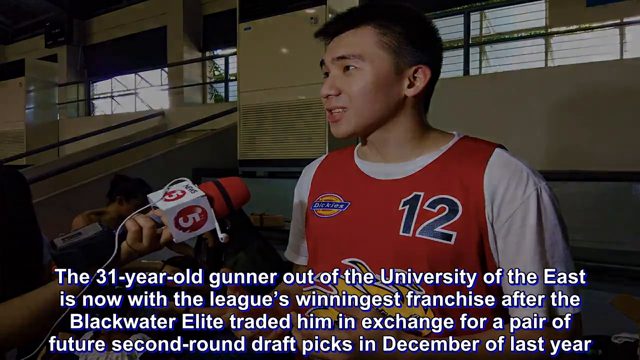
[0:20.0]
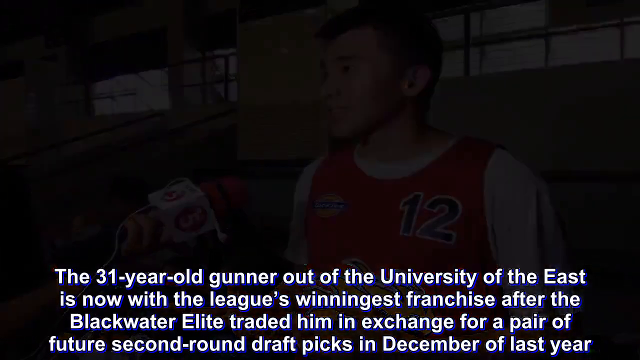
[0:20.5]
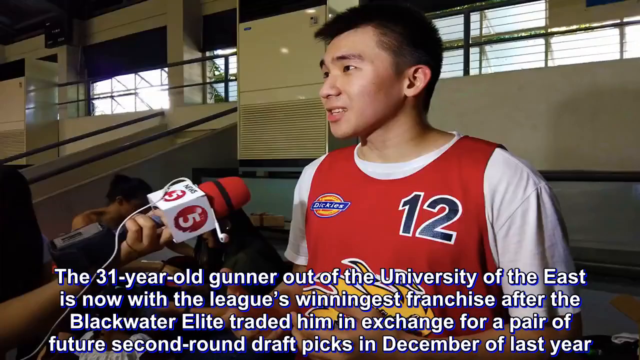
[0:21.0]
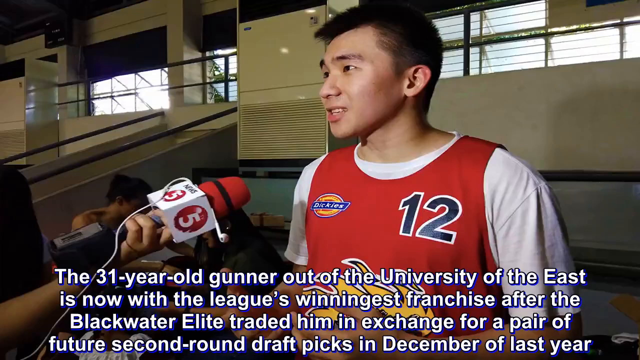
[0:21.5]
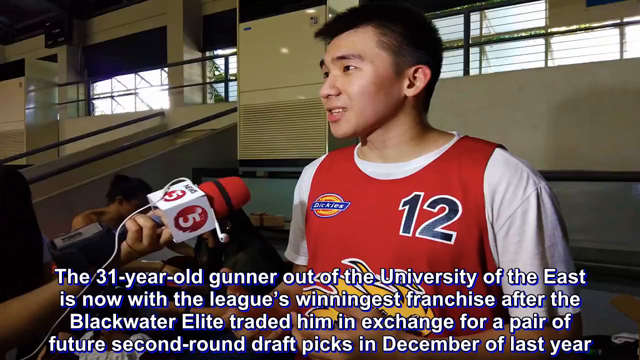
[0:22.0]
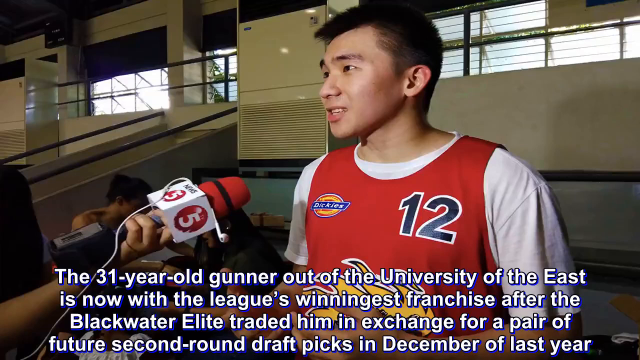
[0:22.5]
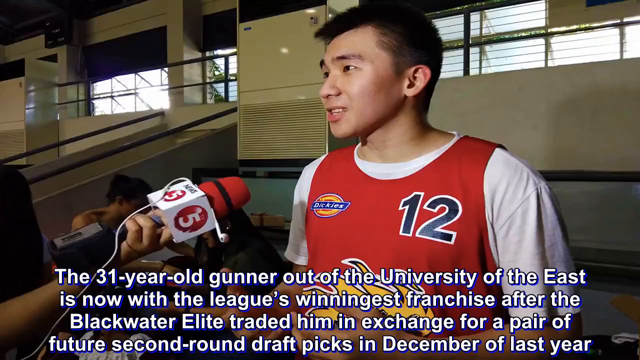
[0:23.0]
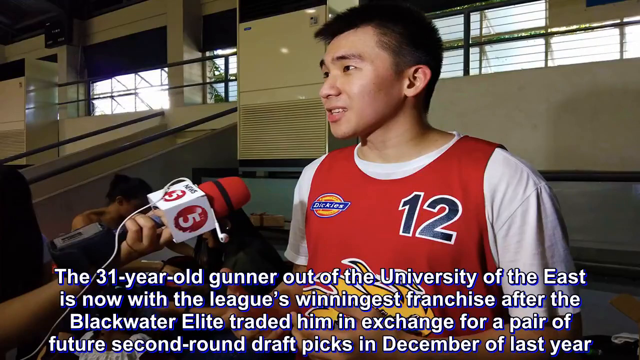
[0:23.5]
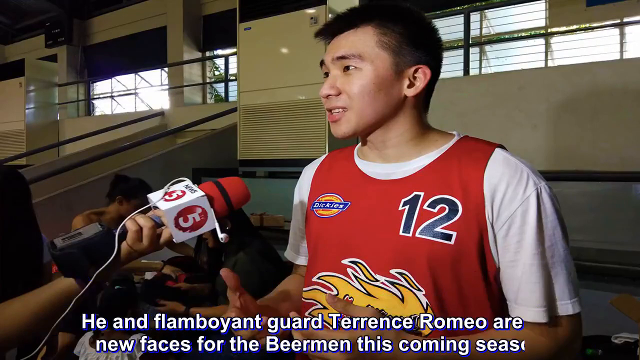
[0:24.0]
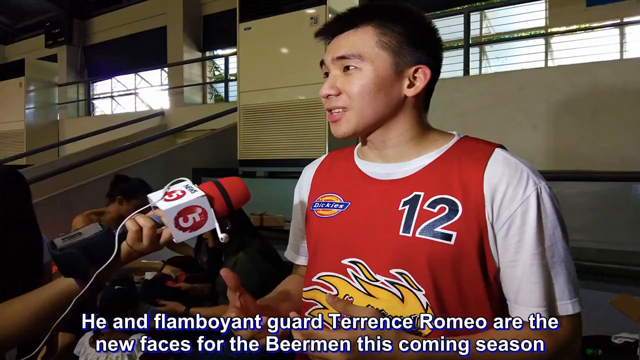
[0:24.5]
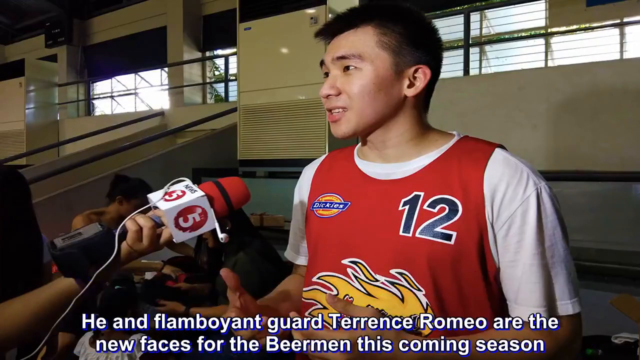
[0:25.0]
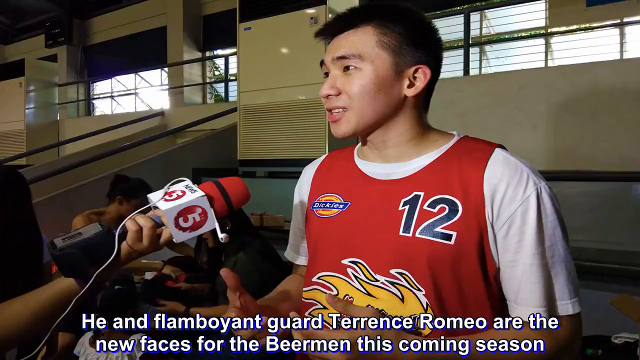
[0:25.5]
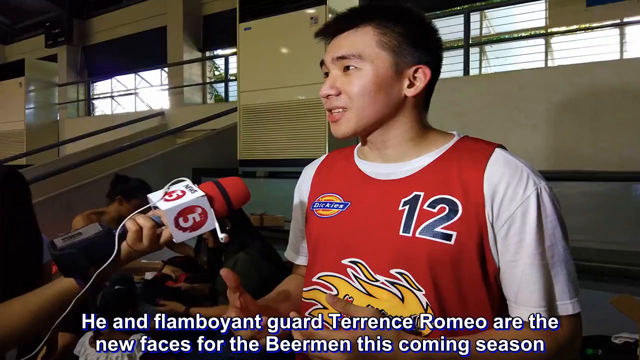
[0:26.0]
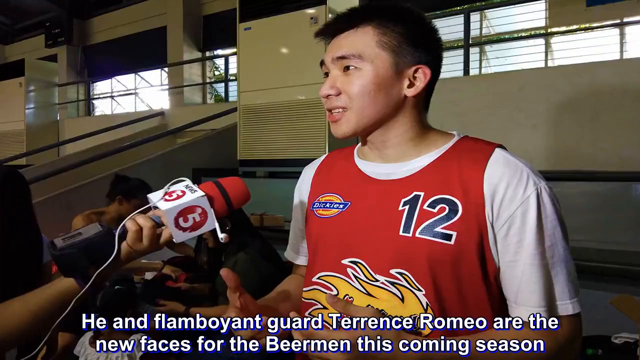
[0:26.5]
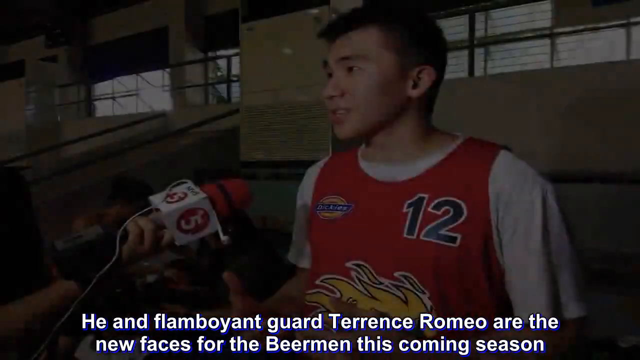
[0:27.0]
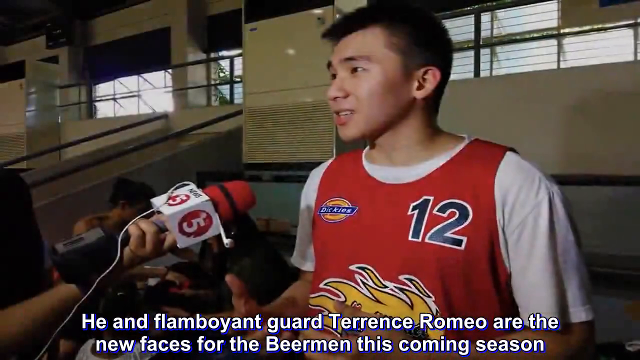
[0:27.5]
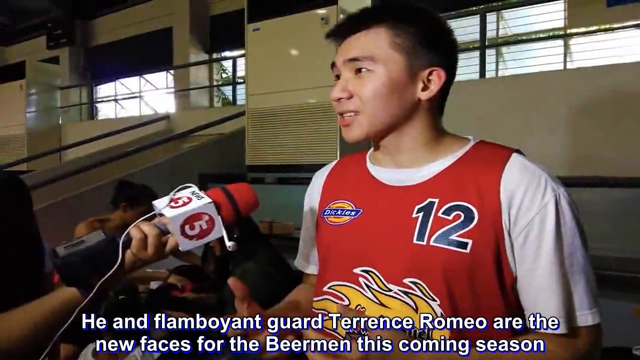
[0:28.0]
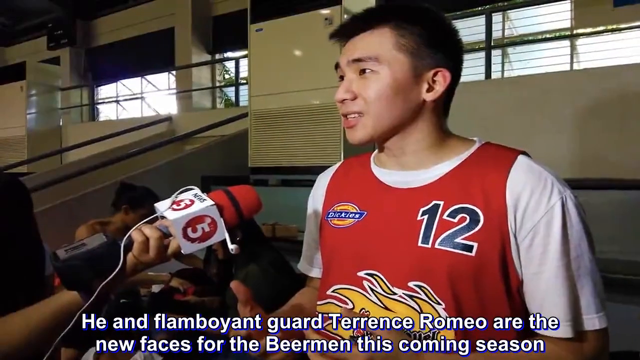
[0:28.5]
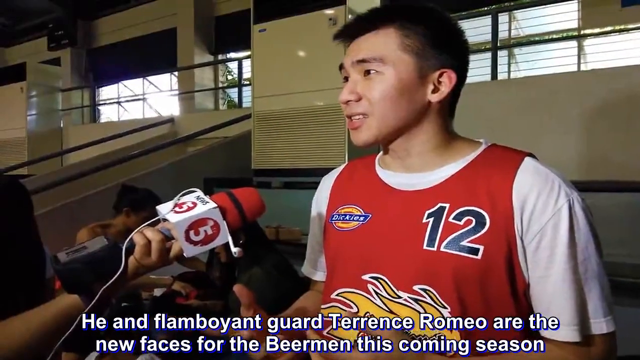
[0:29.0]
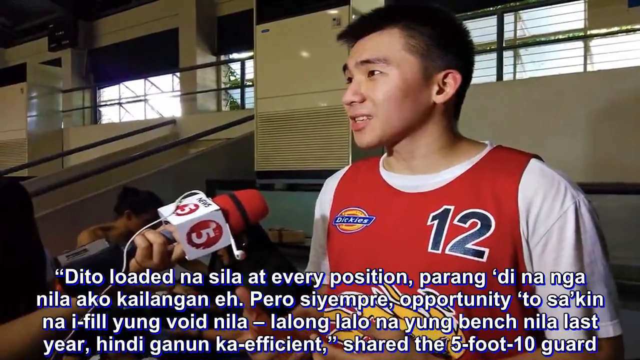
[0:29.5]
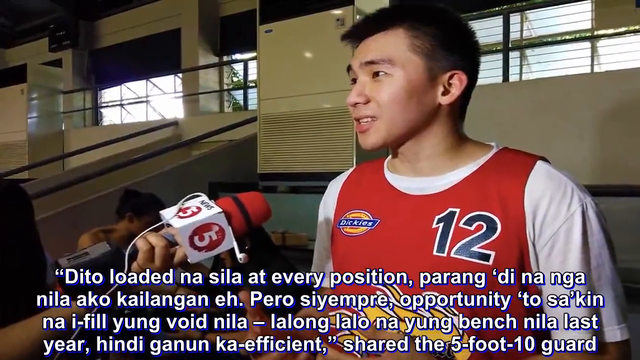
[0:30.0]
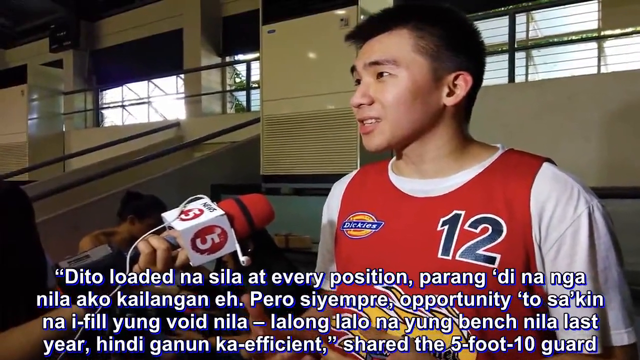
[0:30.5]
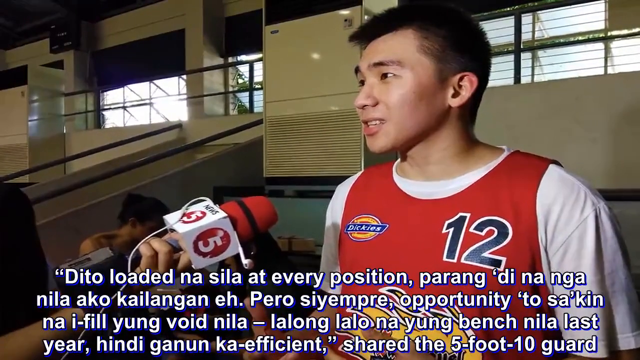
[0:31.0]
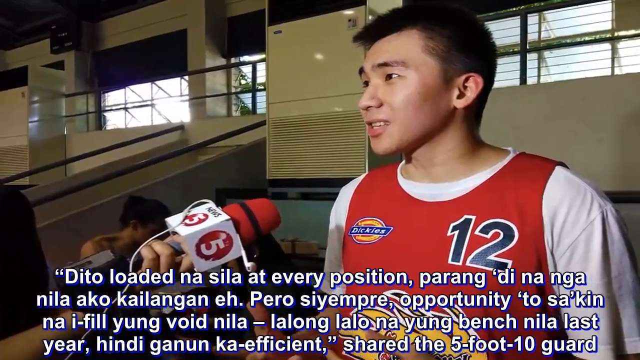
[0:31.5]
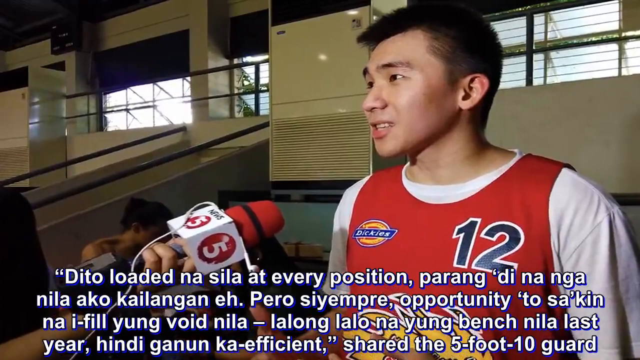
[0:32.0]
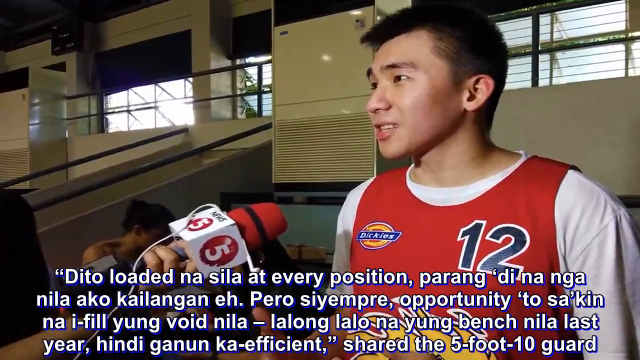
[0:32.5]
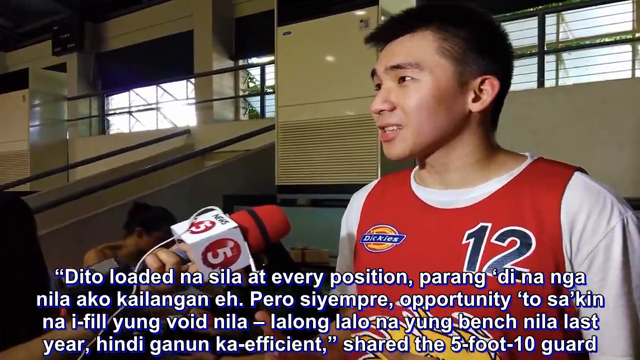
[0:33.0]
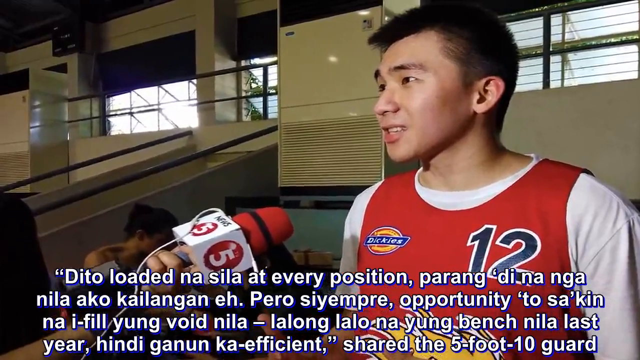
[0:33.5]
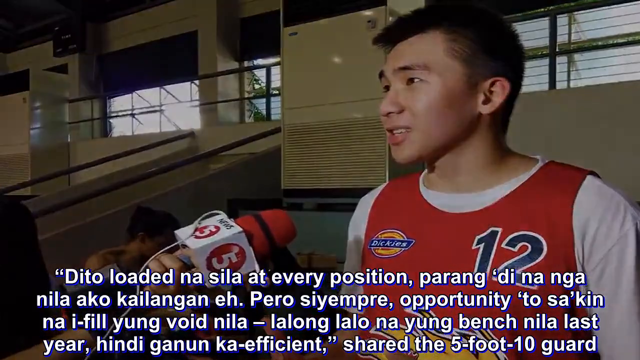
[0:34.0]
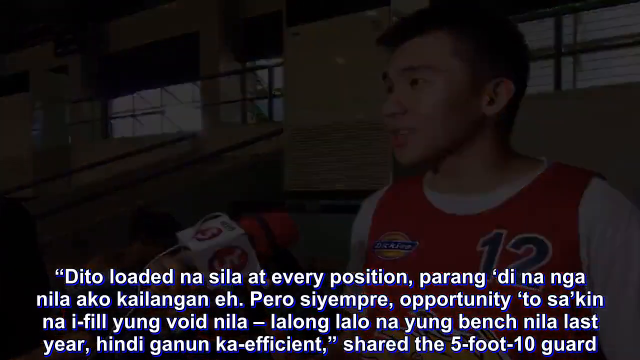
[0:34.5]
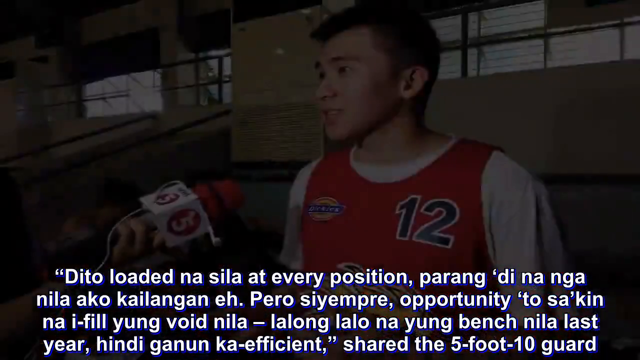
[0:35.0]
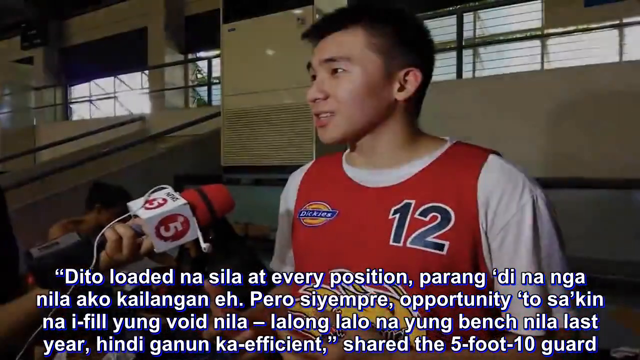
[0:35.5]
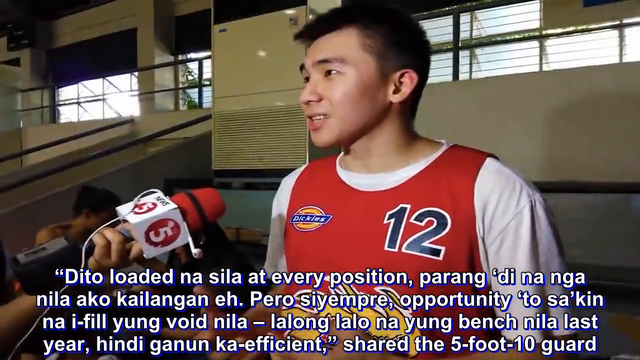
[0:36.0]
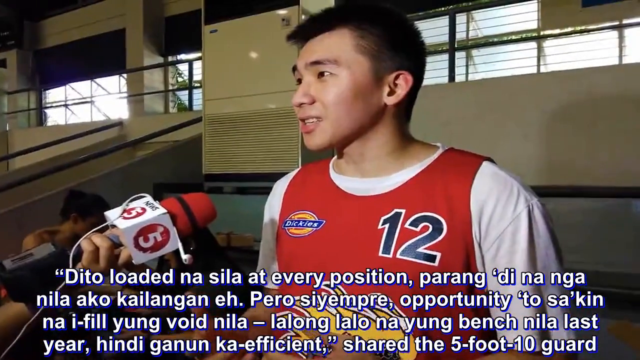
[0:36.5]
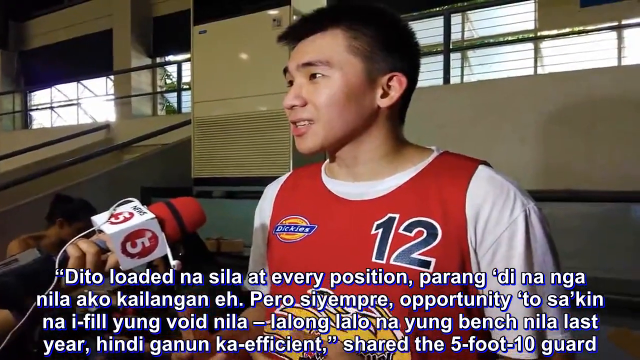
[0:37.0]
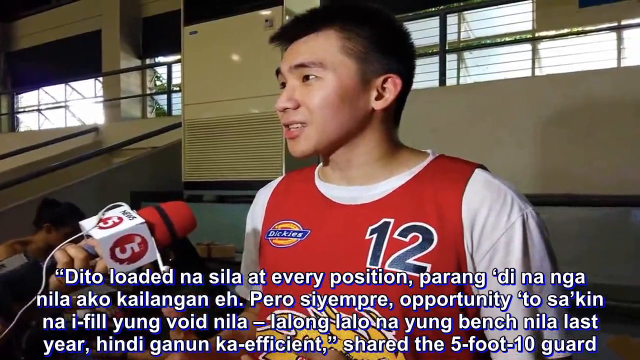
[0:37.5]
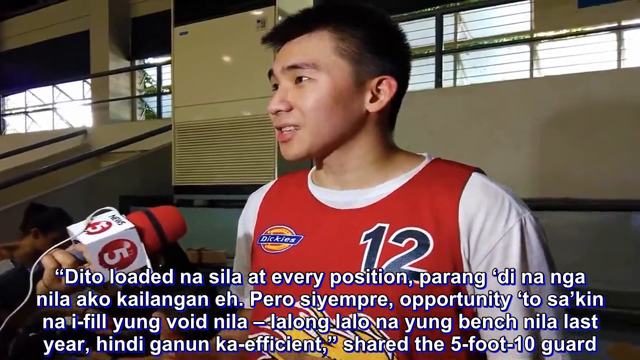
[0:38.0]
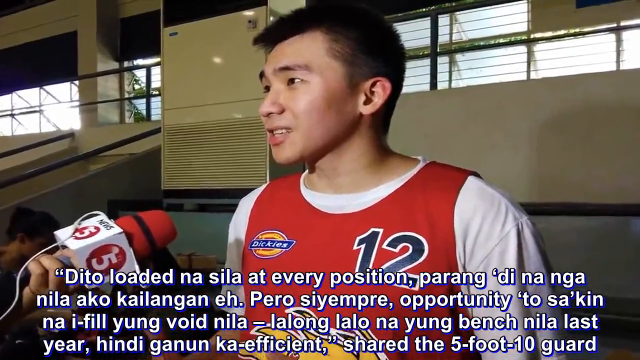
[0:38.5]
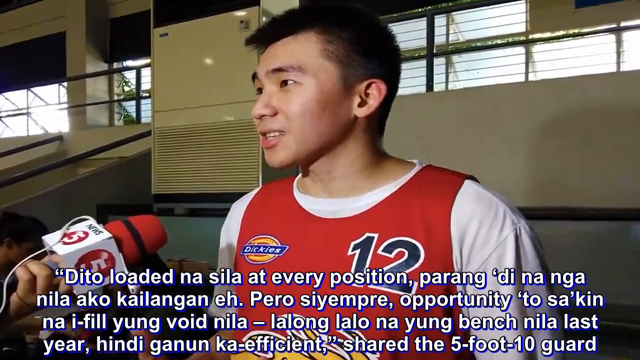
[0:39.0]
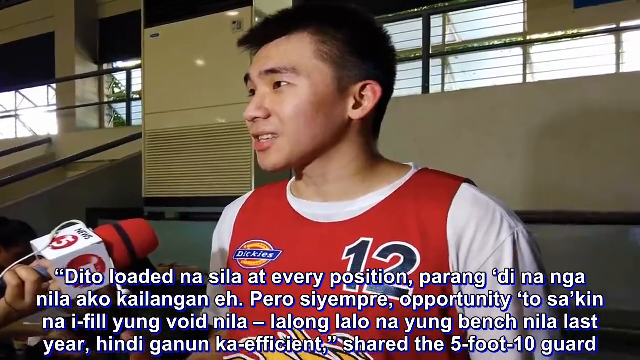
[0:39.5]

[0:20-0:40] The same setting shows the Asian man with short black hair on the right, looking to the left. The image is a still photo. He wears a red jersey with the number 12 on the top left of the chest and a sponsorship for the brand Dickies on the top right, over a white undershirt. To the left is a camera from a news station with the number five on it. White subtitles at the bottom of the video read "the 31 year old gunner out of the University of the East is now with the league's winningest franchise after the Blackwater elite traded him in exchange for a pair of future second round draft picks in December of last year". With a brief flash, the subtitles change to "he and flamboyant guard Terrence Romeo are the new faces for the Beerman this coming season". The image stays still while the text at the bottom changes again, this time to a foreign language. The camera slowly zooms in toward the top left of the still image, then the scene changes with a flash and the camera zooms in toward the right side of the man.